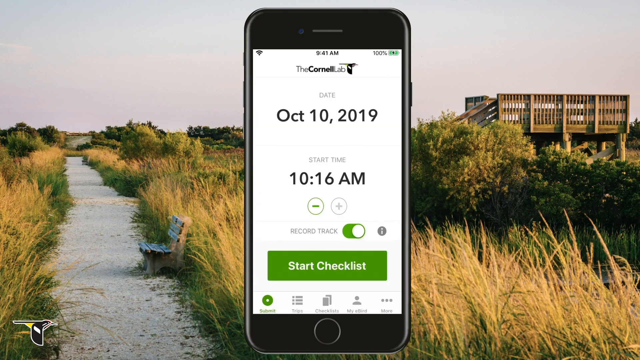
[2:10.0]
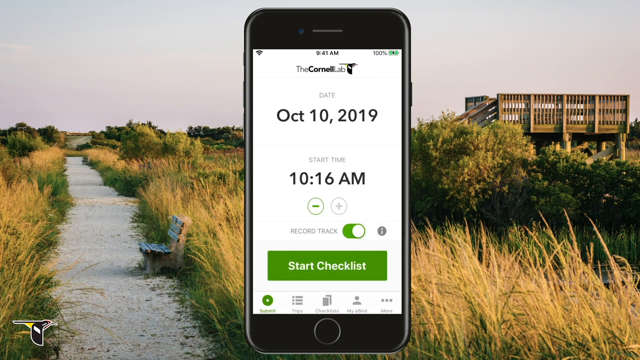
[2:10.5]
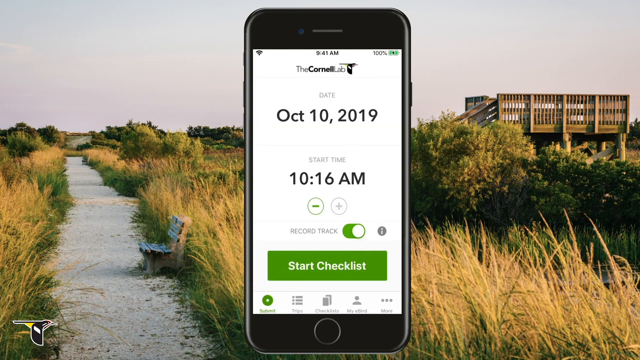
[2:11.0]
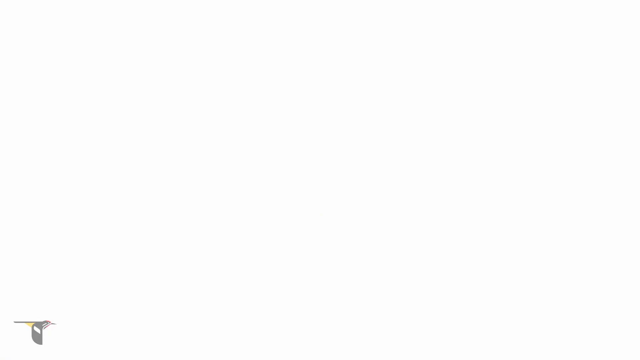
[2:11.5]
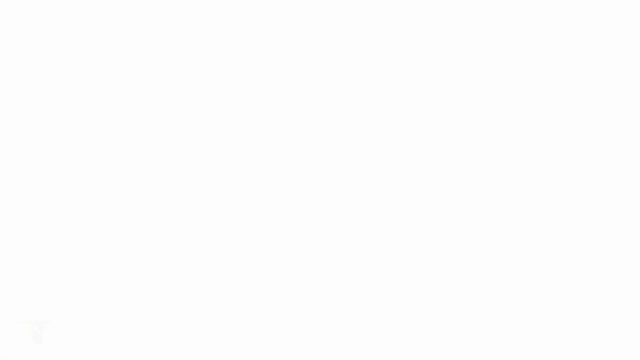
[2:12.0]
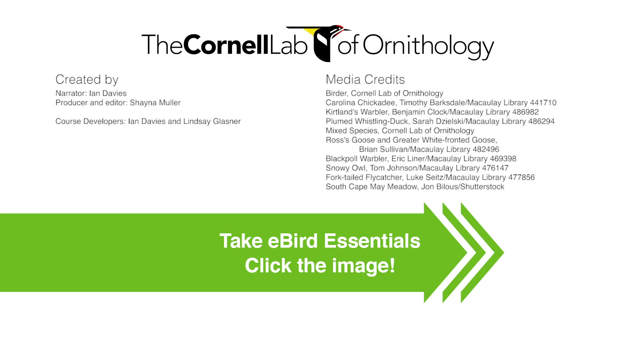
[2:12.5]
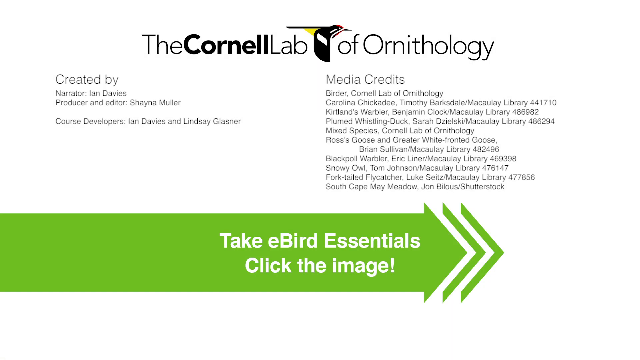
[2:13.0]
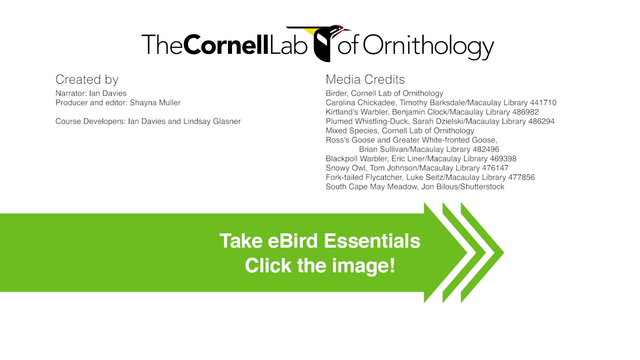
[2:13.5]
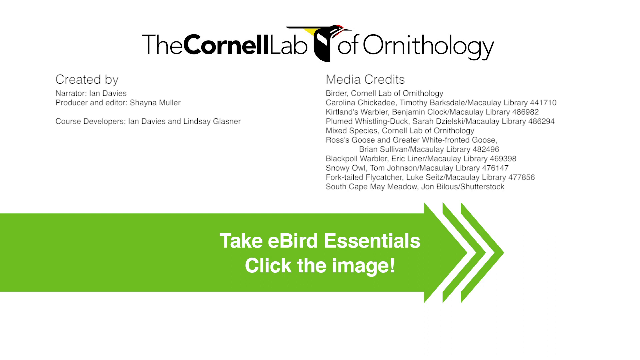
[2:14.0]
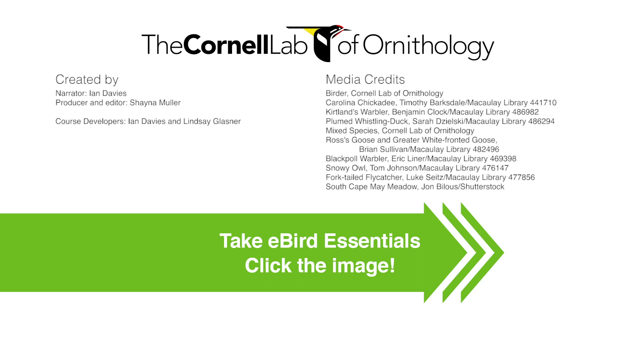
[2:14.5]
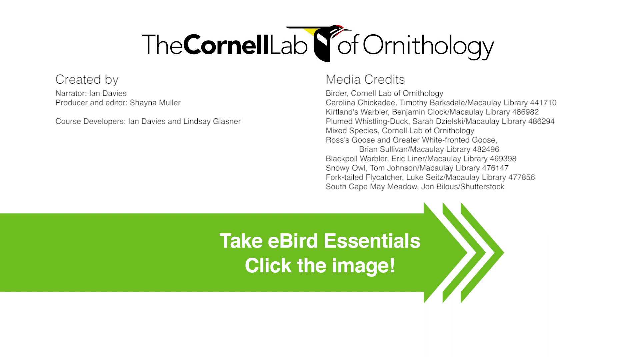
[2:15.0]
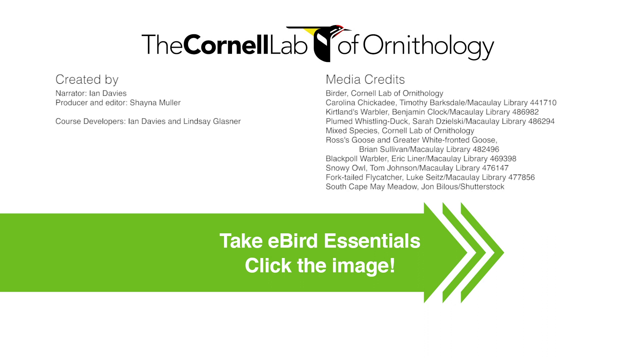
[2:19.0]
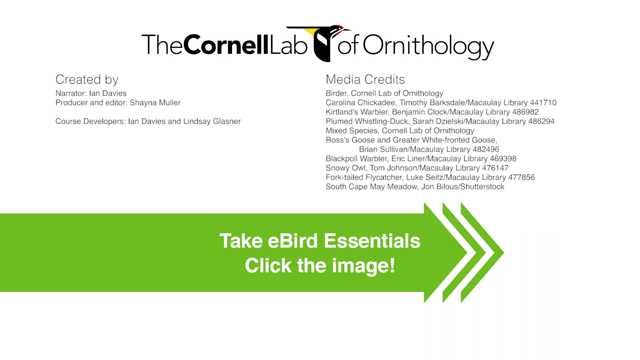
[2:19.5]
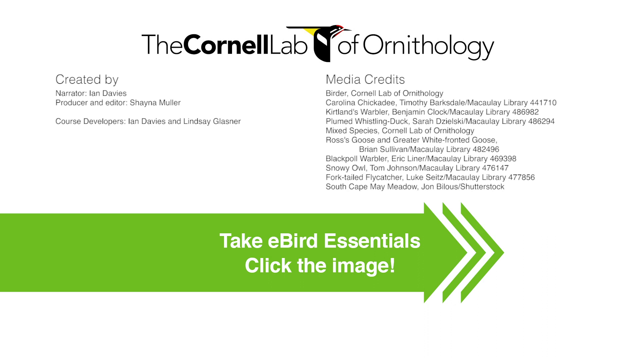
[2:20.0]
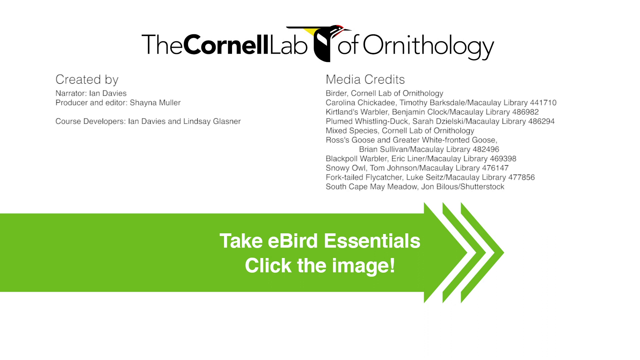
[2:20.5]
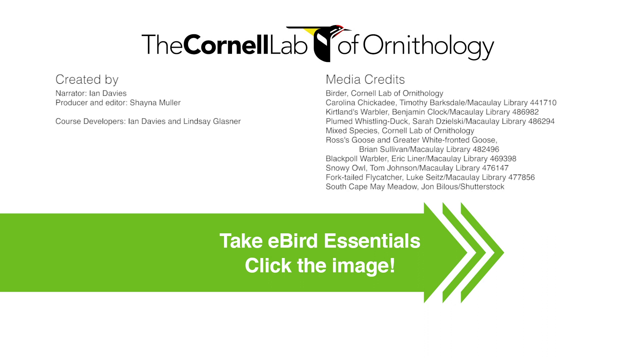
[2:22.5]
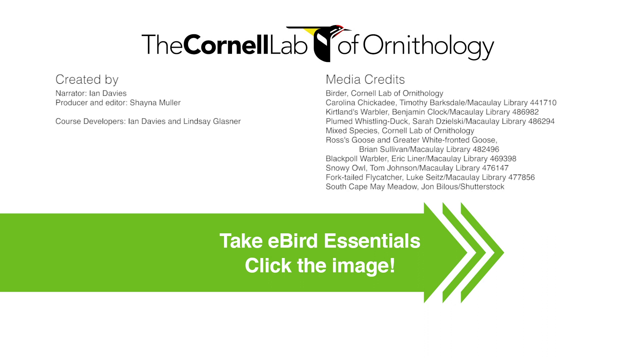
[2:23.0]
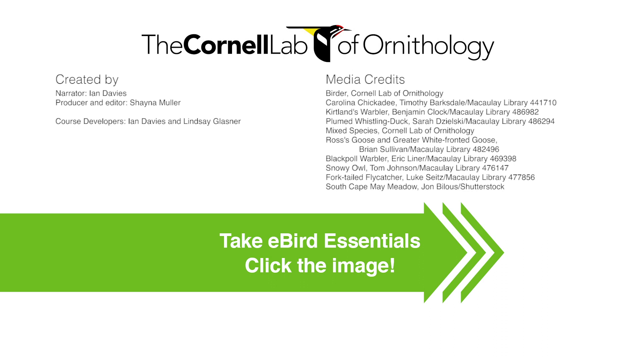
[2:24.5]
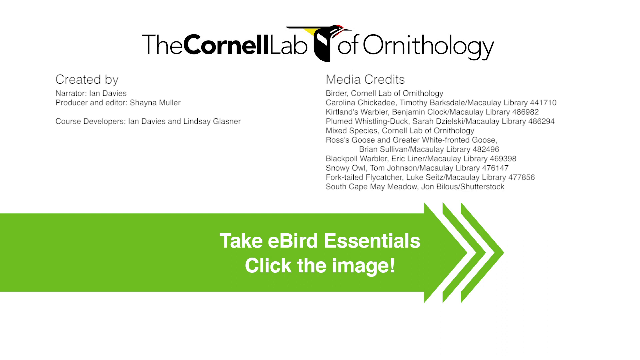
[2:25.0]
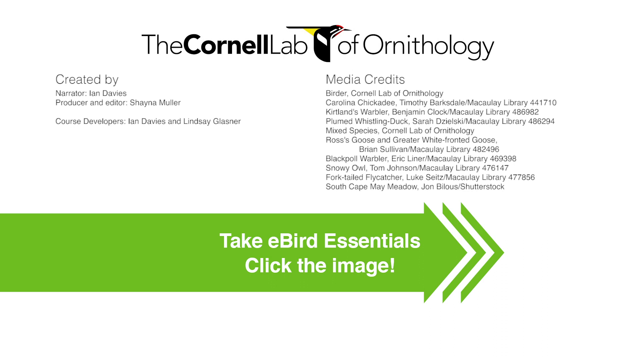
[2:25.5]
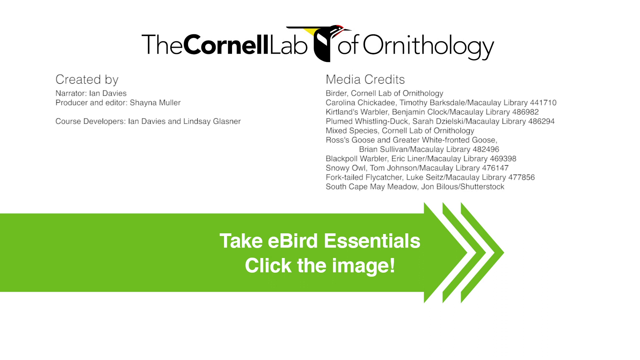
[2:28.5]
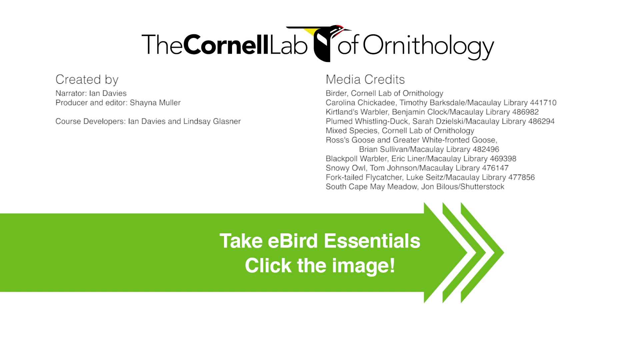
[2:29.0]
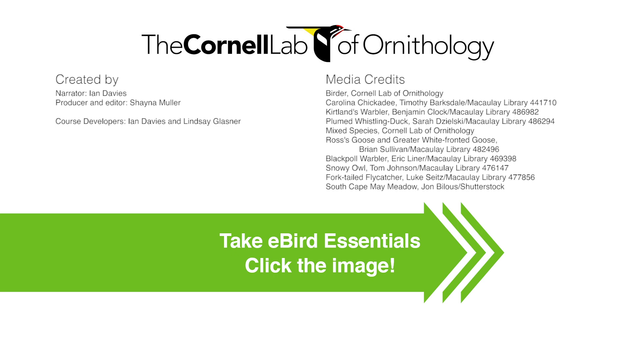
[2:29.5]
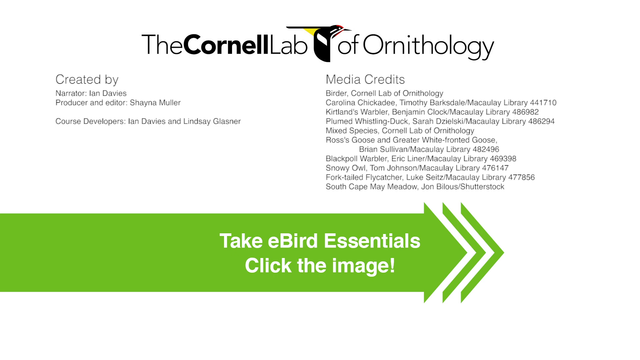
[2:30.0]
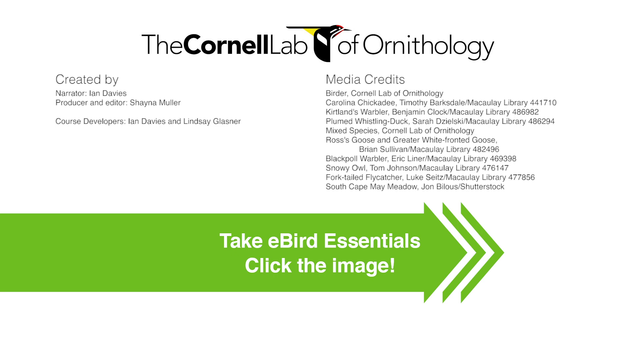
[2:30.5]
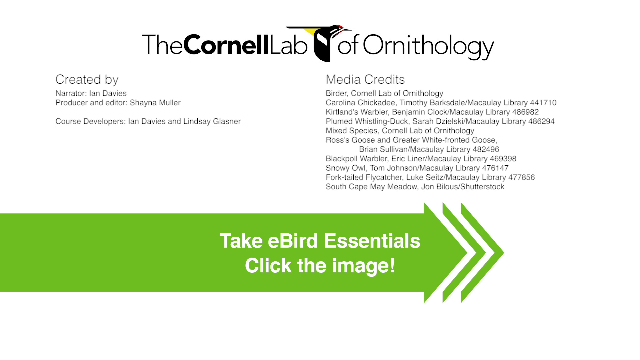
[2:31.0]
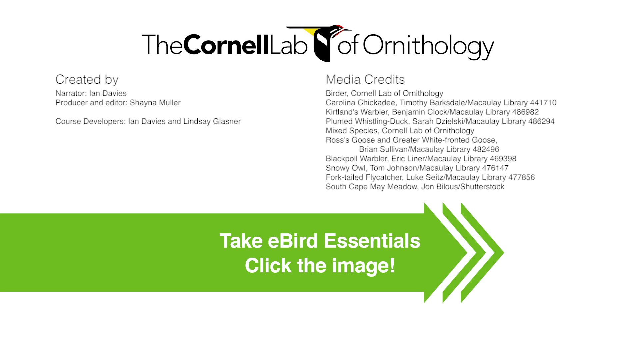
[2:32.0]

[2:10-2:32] The main app screen is overlaid on a background that appears to show a waterway with grassy banks and a grassy knoll, with possibly an observation deck next to it, apparently in a park, possibly a national park. The app shows the Cornell Lab logo, the date of the observation, the start time and checklist. The video then moves away from the demo to credits reading "Cornell Lab of Ornithology". A column on the left-hand side lists the video credits, a handful of names including the producer and editor and course developers. On the right-hand side is a group labeled "media credits", listing the different birds seen in the video, each with a person associated with it. Below that is a green arrow with the text "take eBirds essentials, click the image". The video ends on that page.